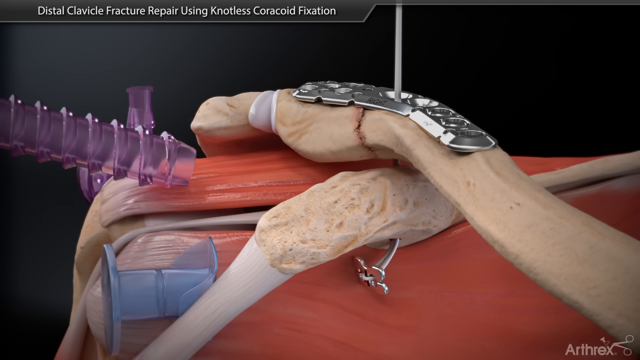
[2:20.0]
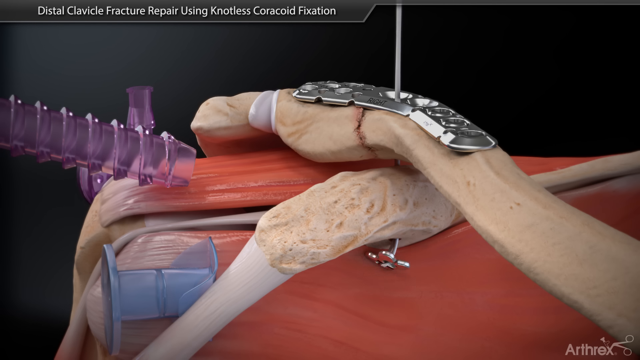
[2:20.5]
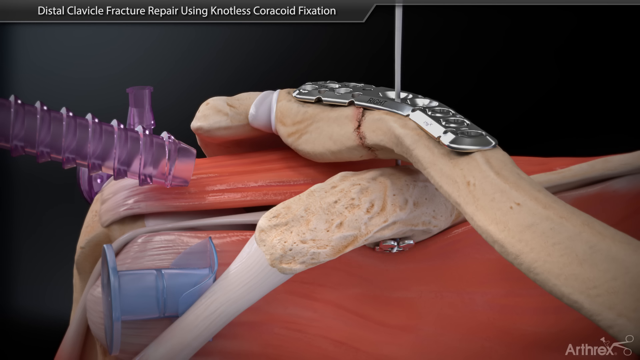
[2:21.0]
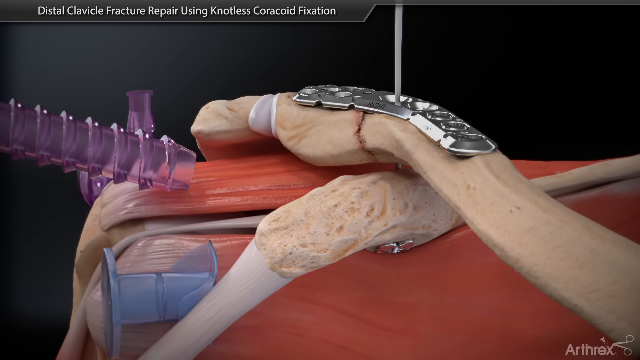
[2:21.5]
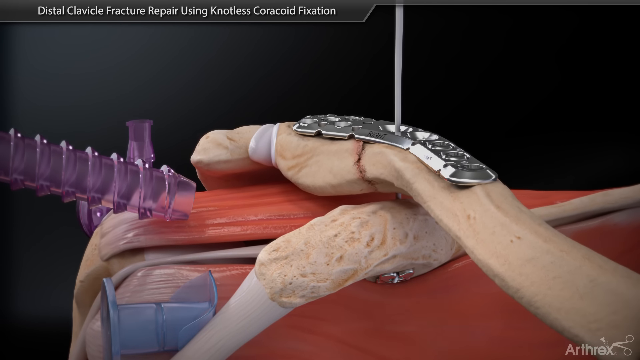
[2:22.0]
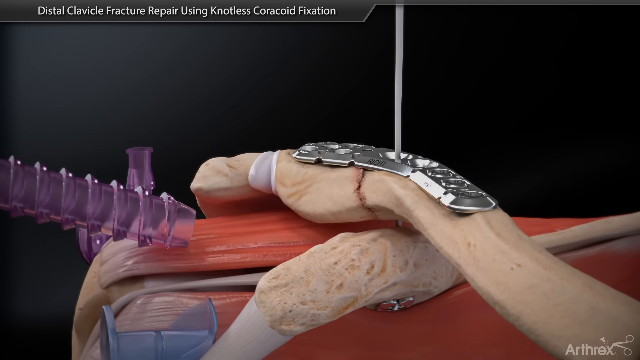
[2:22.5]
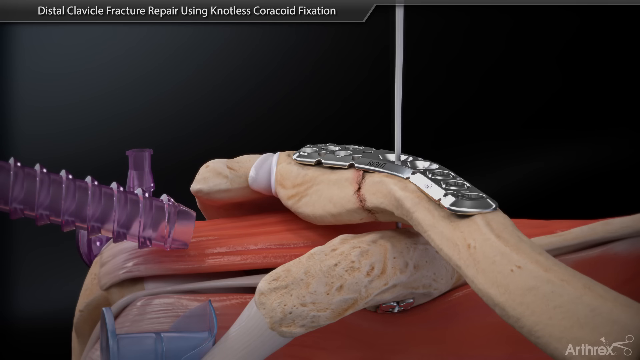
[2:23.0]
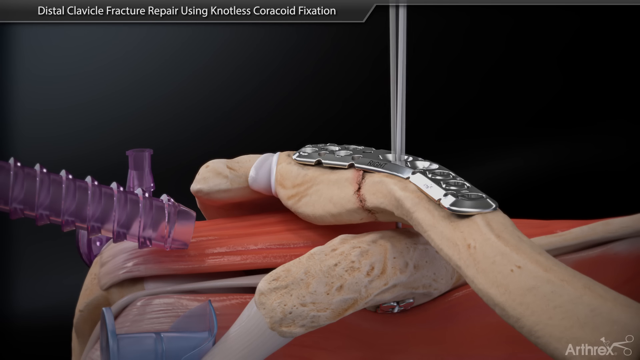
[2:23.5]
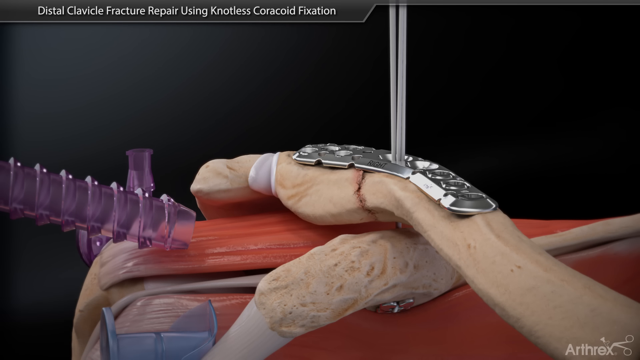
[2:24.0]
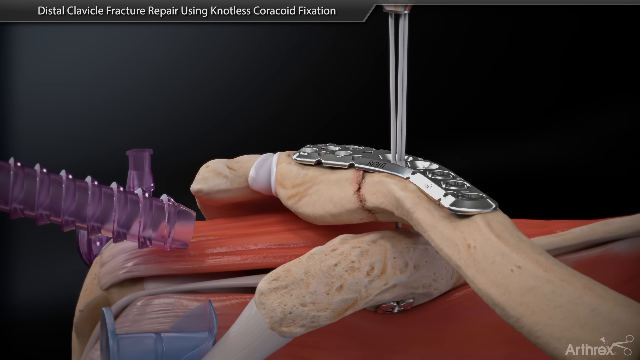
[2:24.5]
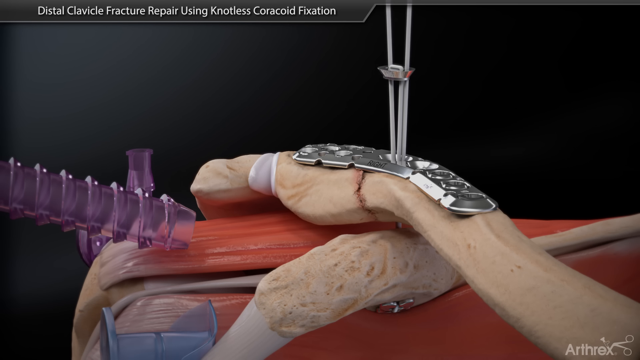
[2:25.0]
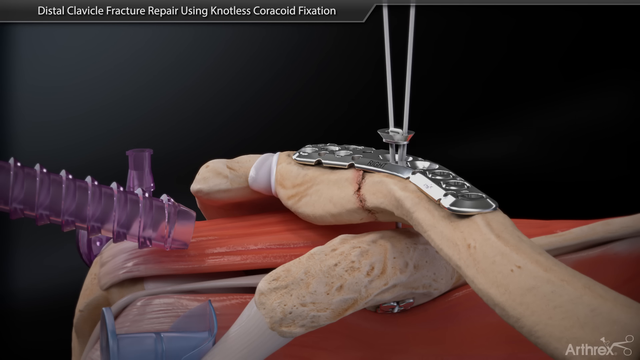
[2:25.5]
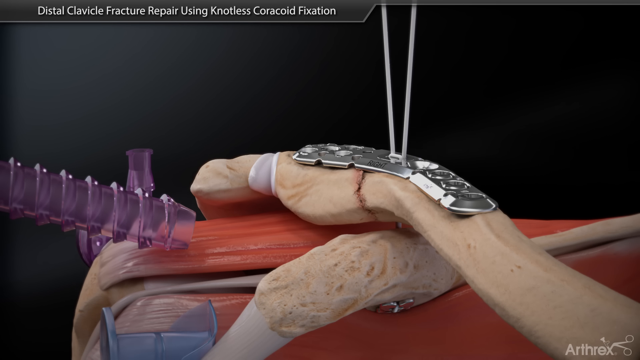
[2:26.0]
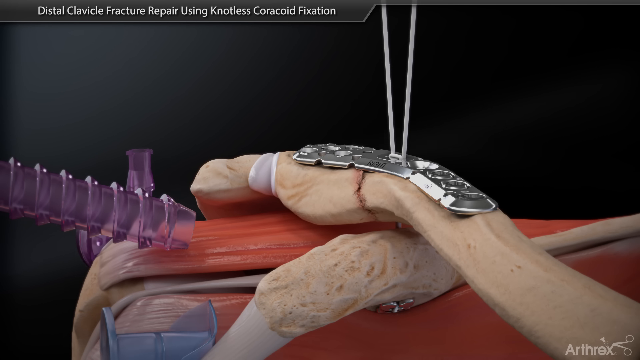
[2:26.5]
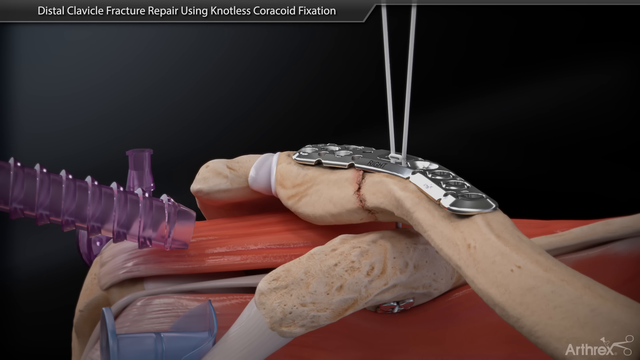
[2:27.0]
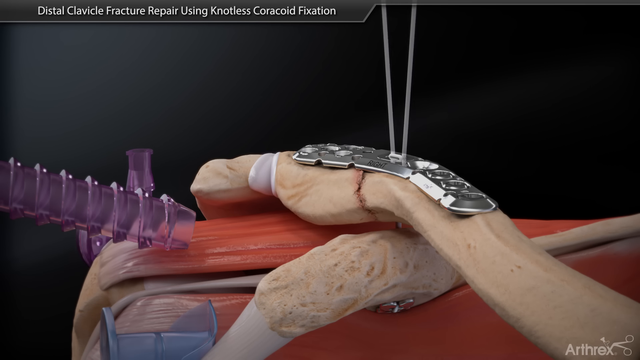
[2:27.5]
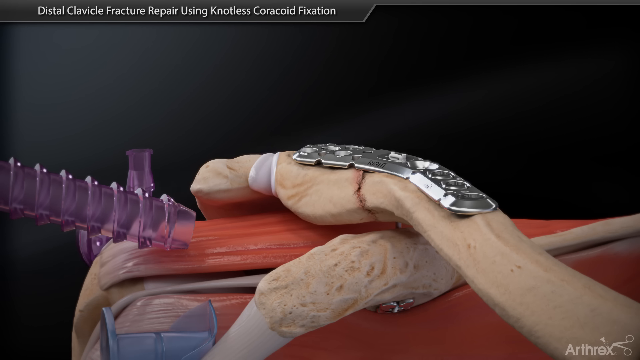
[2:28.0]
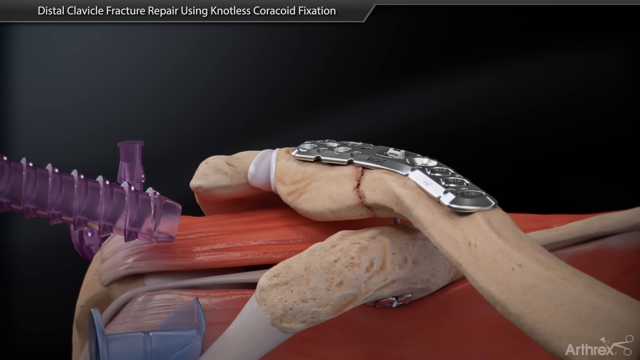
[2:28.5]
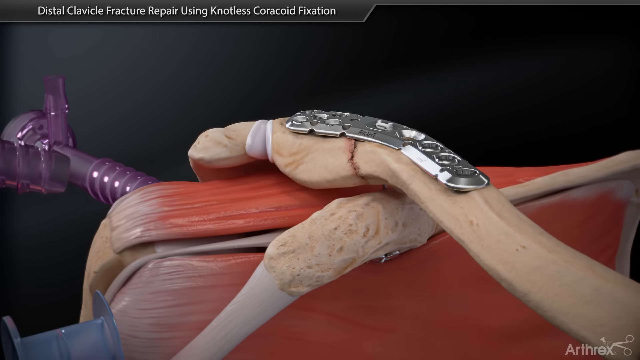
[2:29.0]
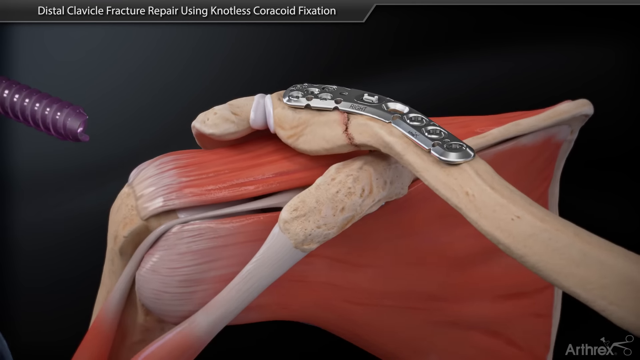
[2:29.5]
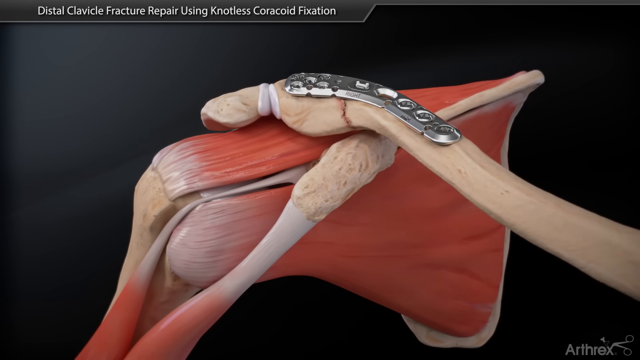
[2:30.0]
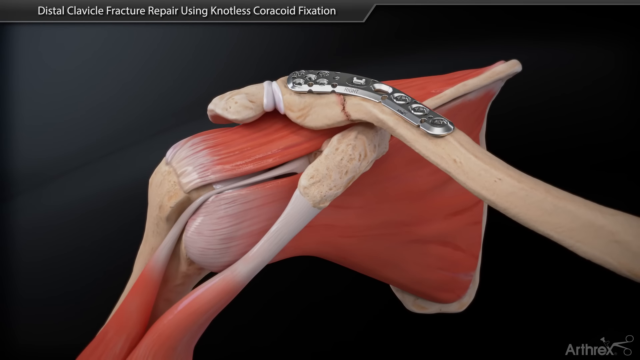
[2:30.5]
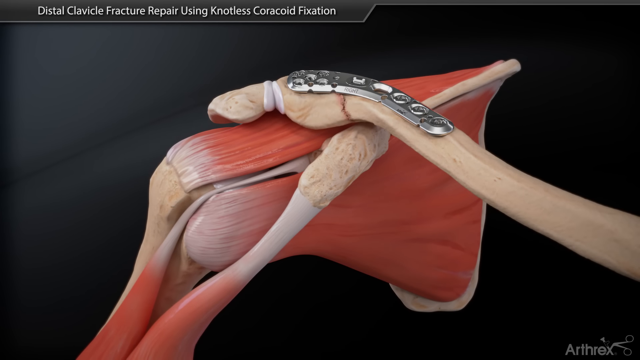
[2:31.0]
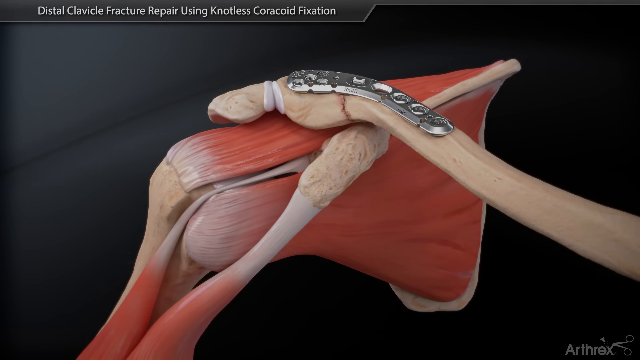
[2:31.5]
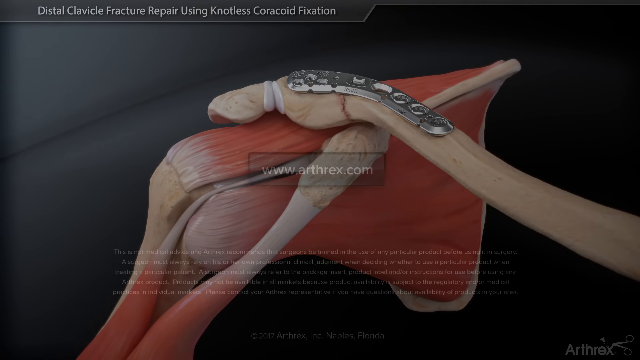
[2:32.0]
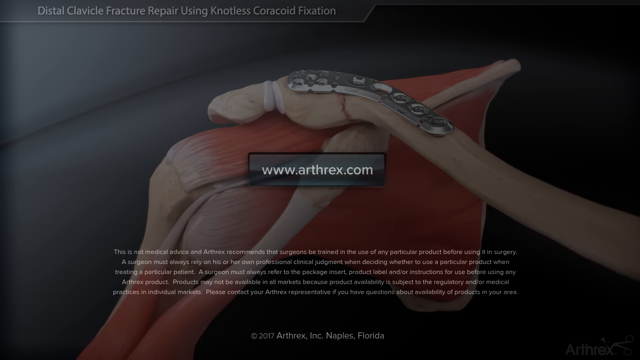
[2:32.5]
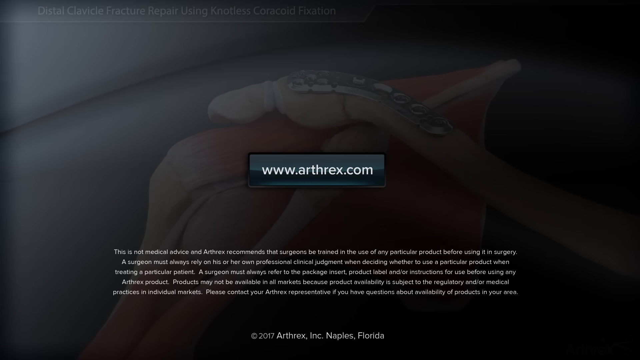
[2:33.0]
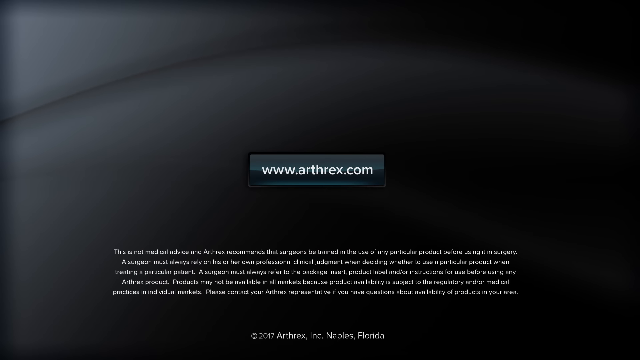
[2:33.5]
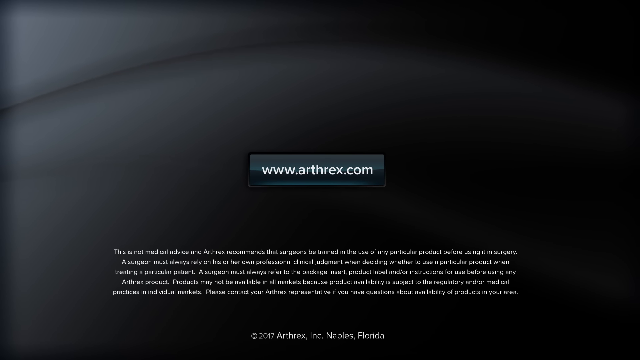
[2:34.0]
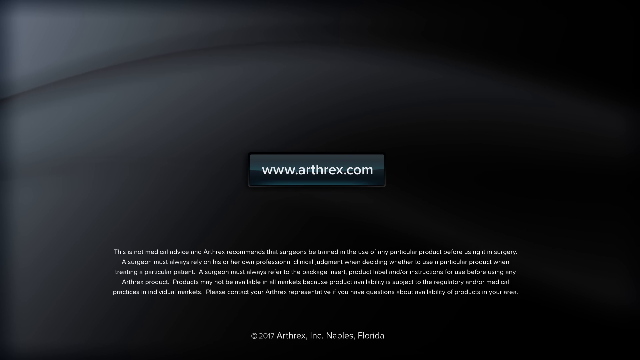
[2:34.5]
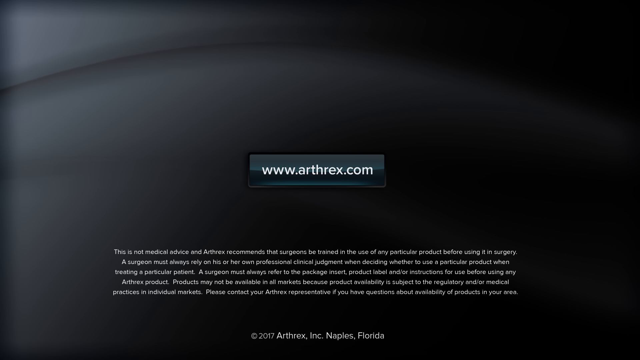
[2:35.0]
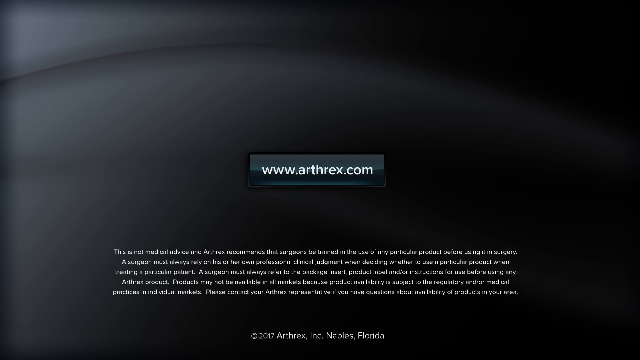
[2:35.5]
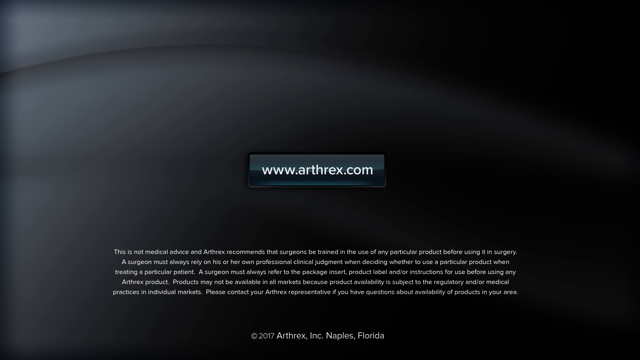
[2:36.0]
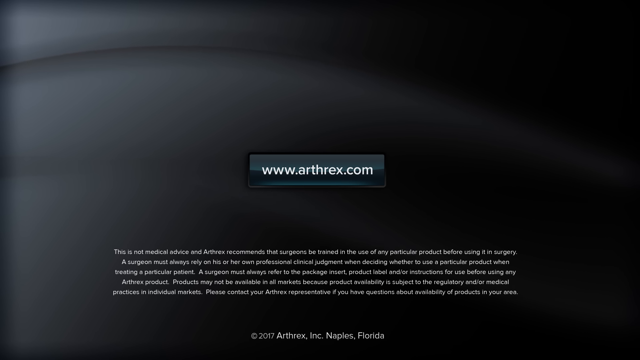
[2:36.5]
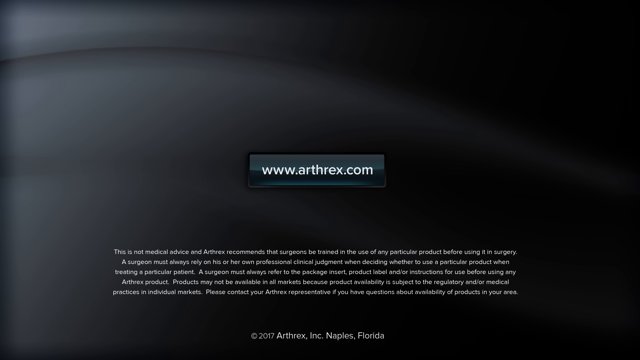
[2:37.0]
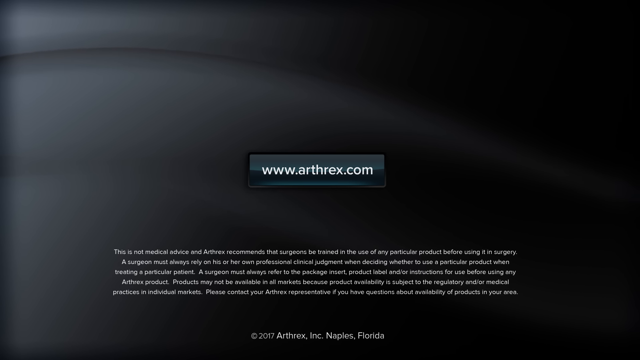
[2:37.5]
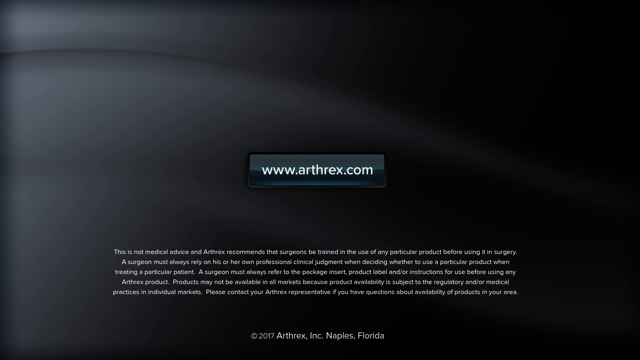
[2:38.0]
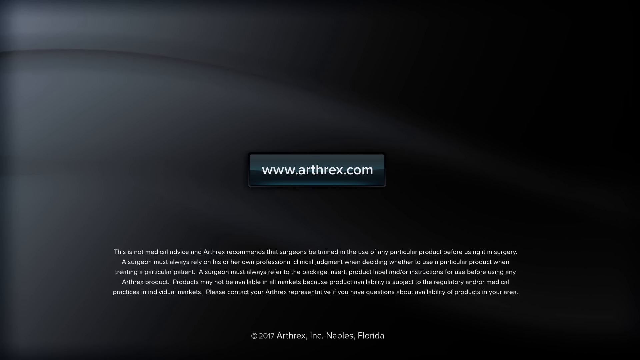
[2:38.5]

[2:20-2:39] Underneath the bottom bone, the little white piece of wire attached to the smaller piece of metal hangs out about two inches, while the wire is visible coming out the top of the top bone. The wire is pulled up until the metal attaches on the bottom. The camera moves upwards again, and the metal on the bottom bone is barely visible at the very bottom of the frame, its top part almost centered. A metal piece comes down, making the wire spread out a little in a V, and attaches to the metal on the top. Then that vanishes, and the two purple pieces, apparently suction, go off the screen to the left. The view rotates back to the beginning position, with the bone going off the right side. It then changes to a background that is black on the right half and gray on the left half, with the gray and black kind of blending in the center. In the center is a really dark blue rectangle with white lettering reading "www.arthrex.com". Below are five long lines of words in super small print, and at the bottom it says "2017, Arthrex. Inc. Naples, Florida".